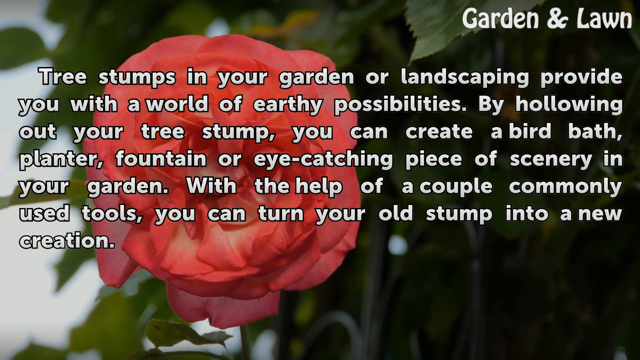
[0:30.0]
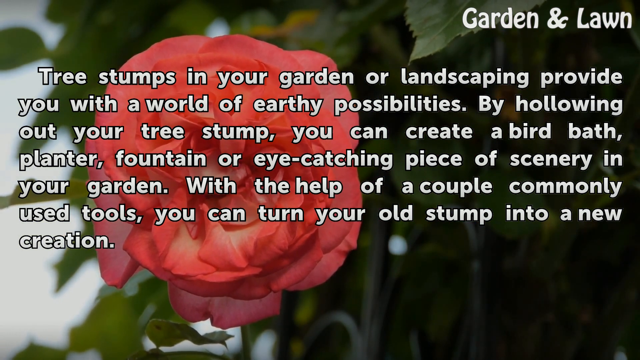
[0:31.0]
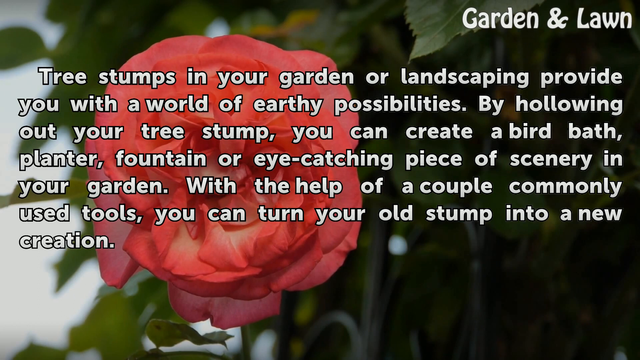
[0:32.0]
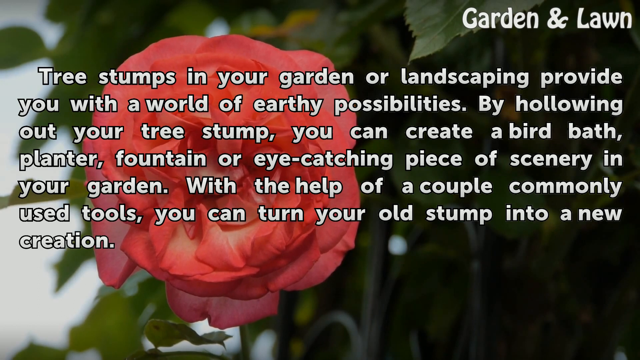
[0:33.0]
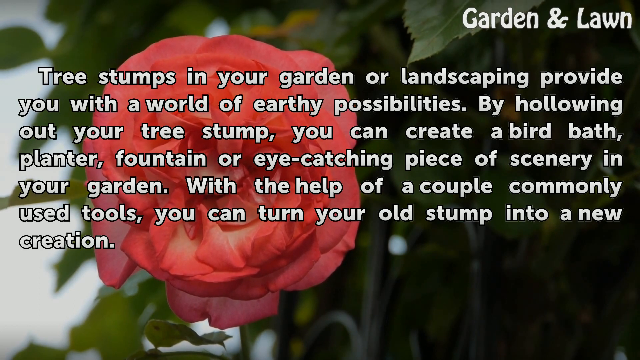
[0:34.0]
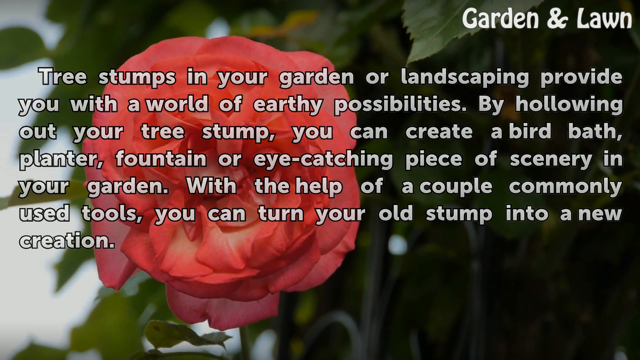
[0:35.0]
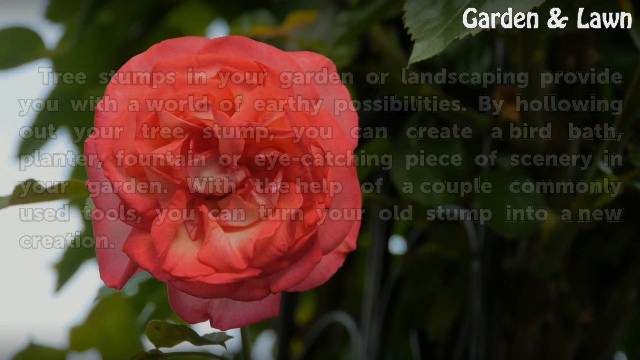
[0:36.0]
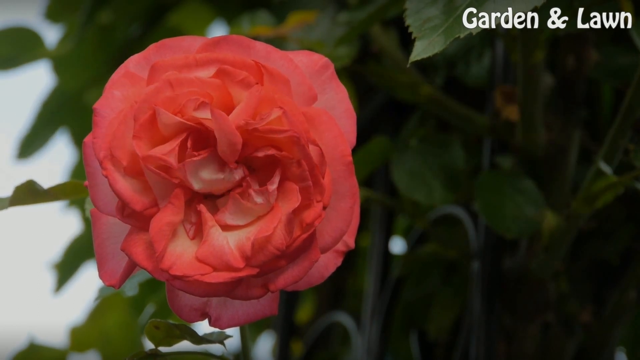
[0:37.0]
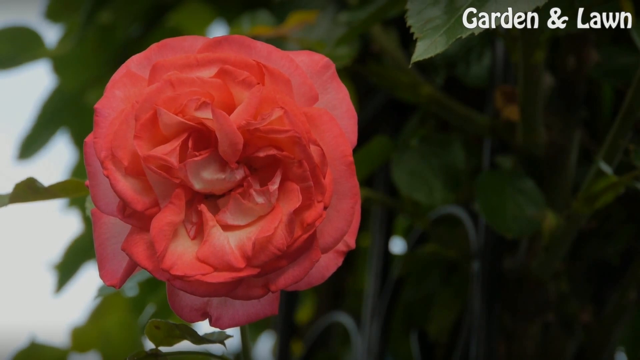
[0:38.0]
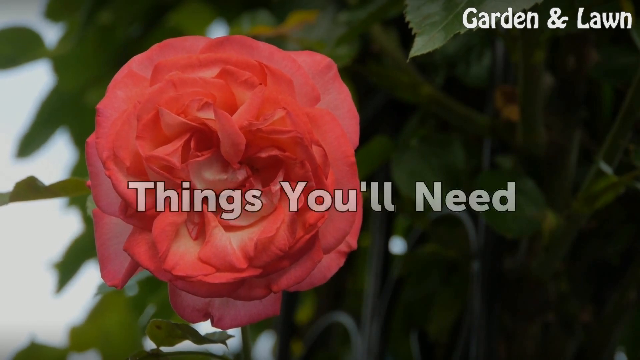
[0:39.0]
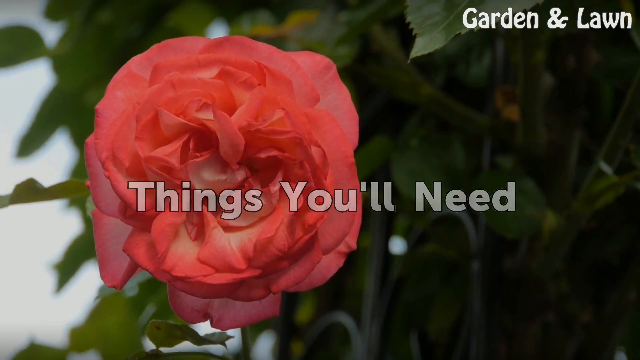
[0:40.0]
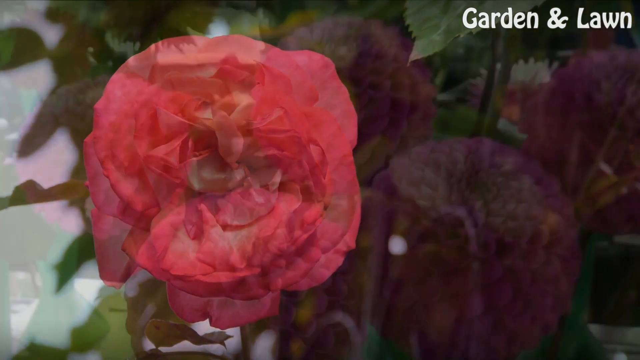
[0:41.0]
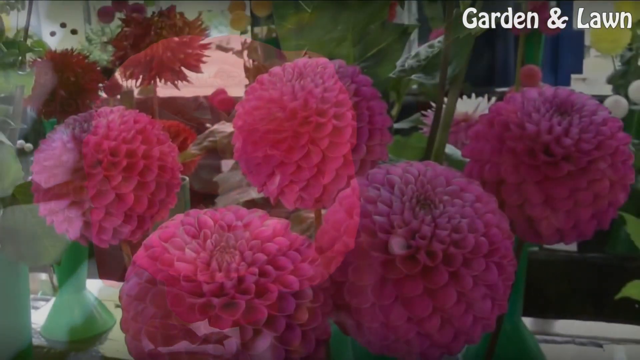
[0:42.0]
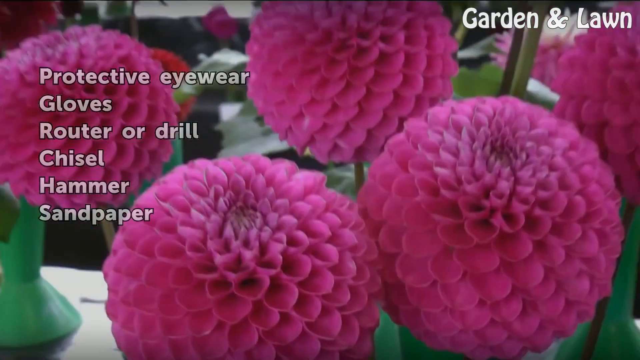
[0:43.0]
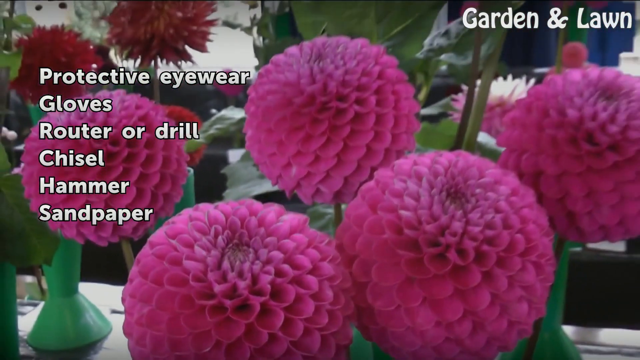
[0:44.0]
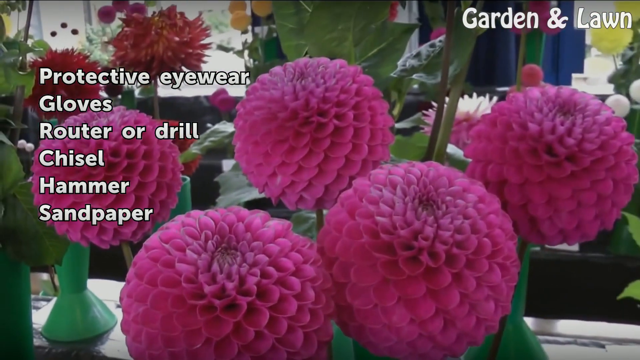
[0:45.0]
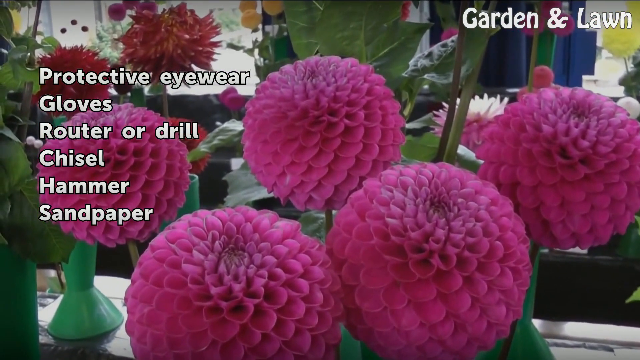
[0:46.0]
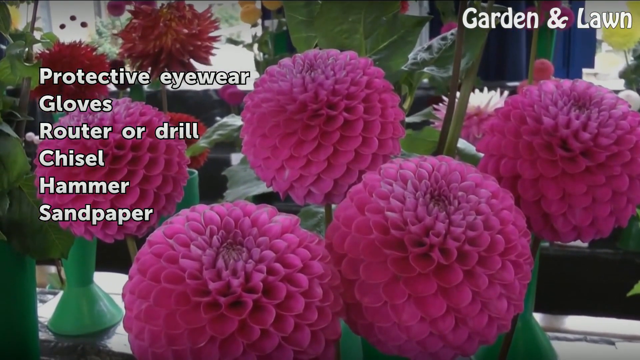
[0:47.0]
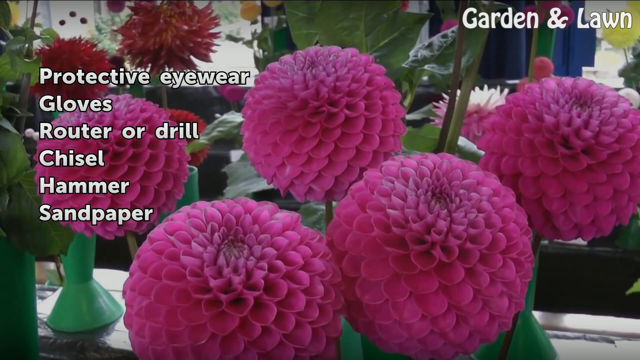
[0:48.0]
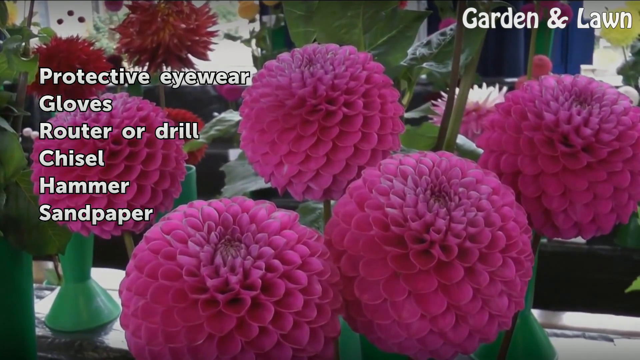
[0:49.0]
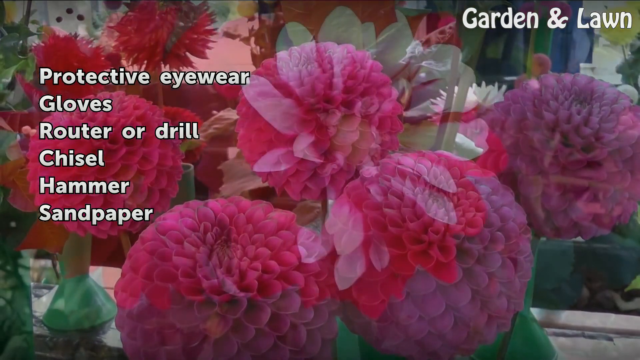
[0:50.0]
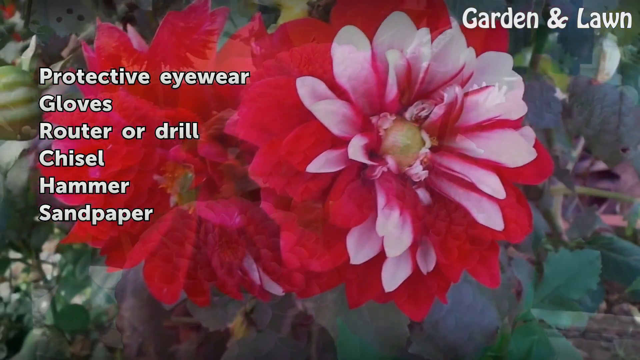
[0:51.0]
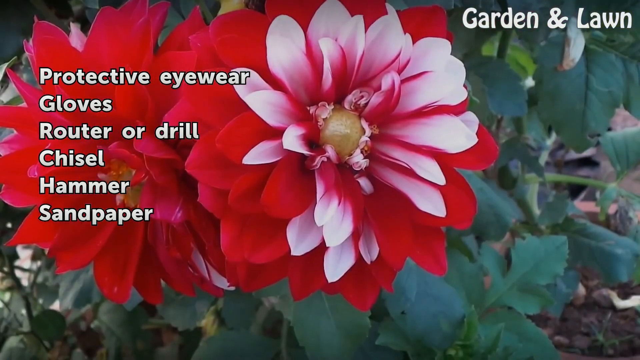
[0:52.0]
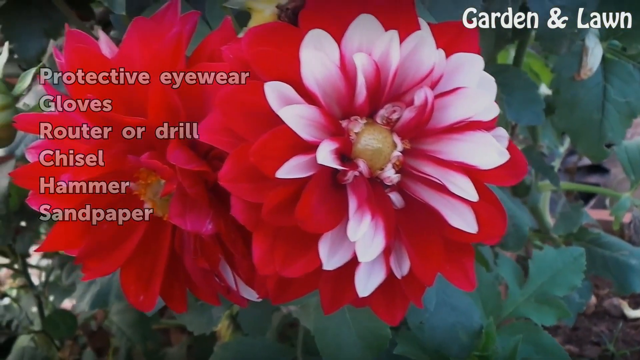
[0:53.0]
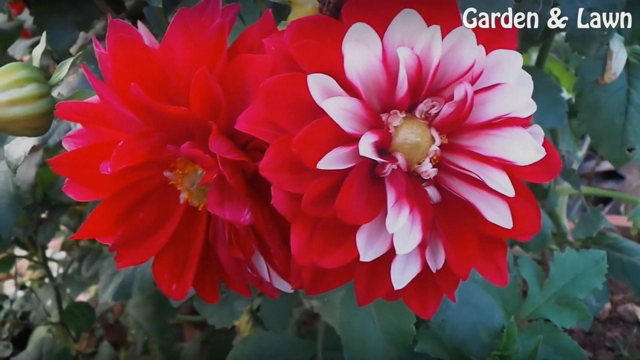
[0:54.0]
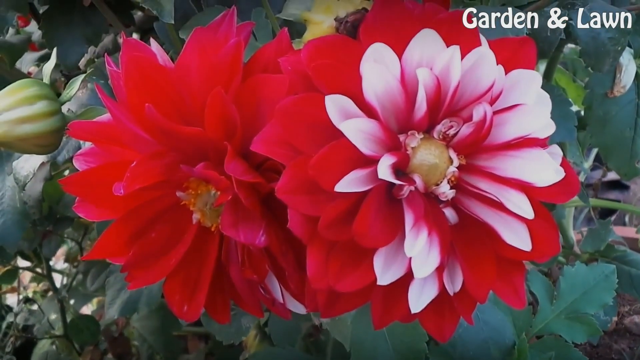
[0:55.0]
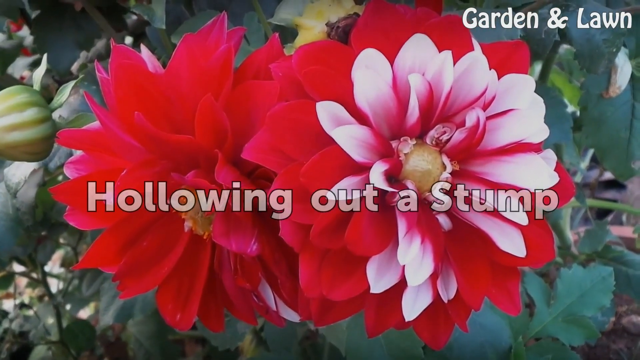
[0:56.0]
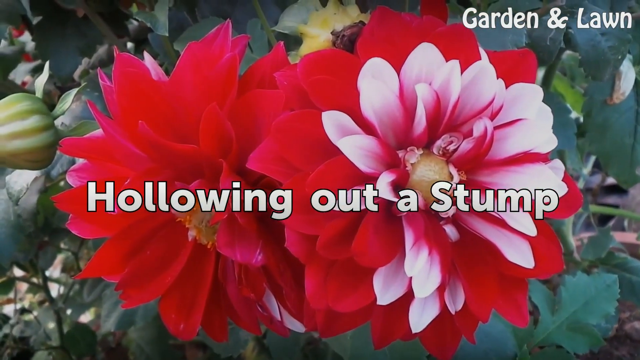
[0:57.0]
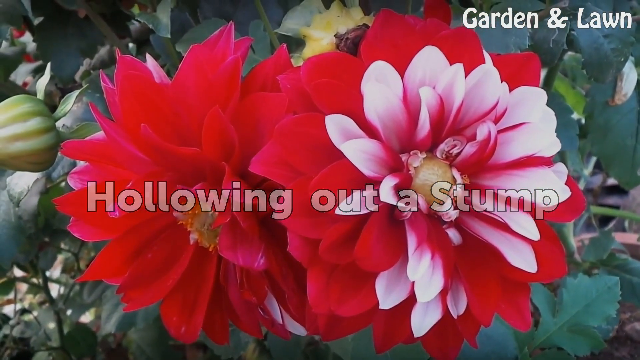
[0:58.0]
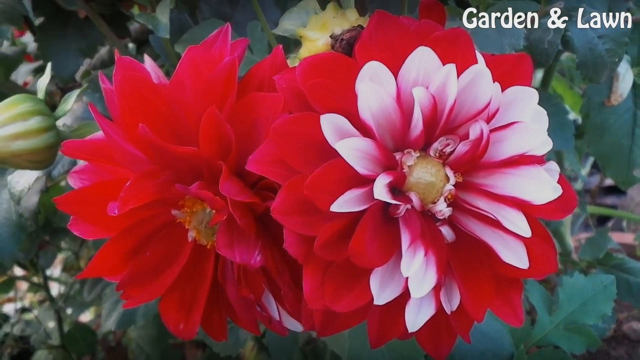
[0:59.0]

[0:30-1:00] The scene shows the text "tree stumps in your garden or landscape provide you with a world of earthly possibilities," noting that by hollowing out tree stumps a bird bath, a fountain, an eye-catching piece of scenery, or any new creation can be made, with a red flower in the background. Another message then pops up on the screen: "things you'll need." A group of big puffy flowers, apparently peonies, is shown with a list: "you'll need protective eyewear, gloves, a router or a drill, a chisel, a hammer, and some sandpaper." Flowers stay in the background the whole time as the camera moves around lightly. The image changes to a red flower with mixed white and red petals, and the text "hollowing out a stump" appears as the instructions begin.